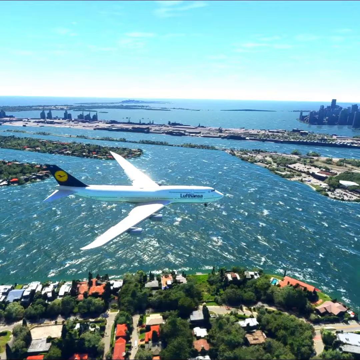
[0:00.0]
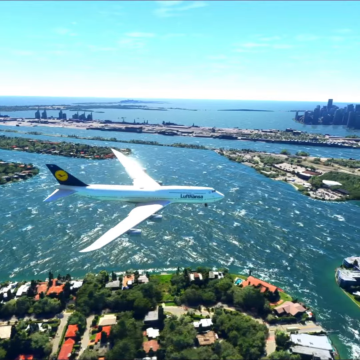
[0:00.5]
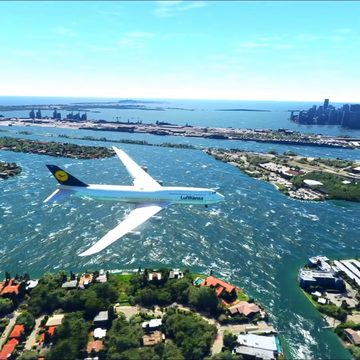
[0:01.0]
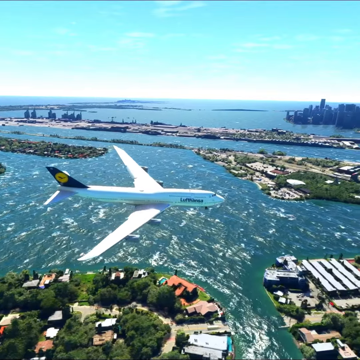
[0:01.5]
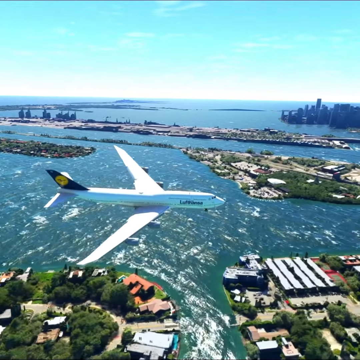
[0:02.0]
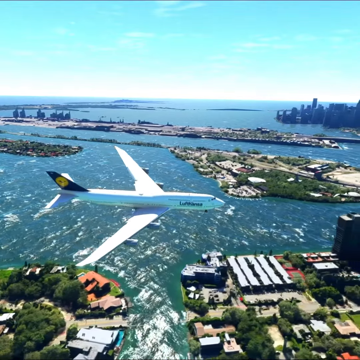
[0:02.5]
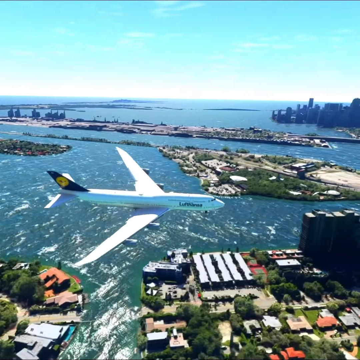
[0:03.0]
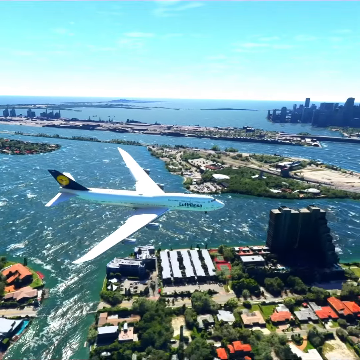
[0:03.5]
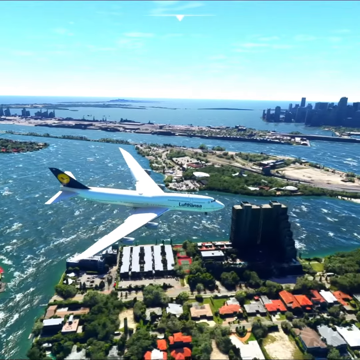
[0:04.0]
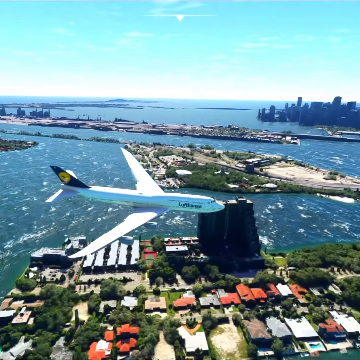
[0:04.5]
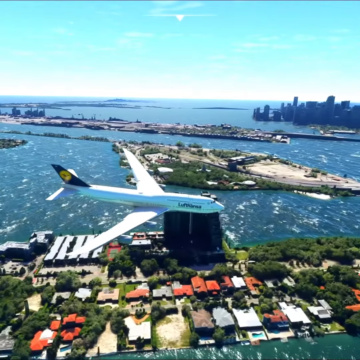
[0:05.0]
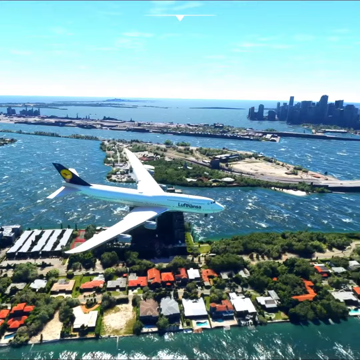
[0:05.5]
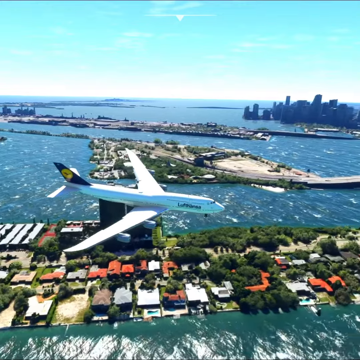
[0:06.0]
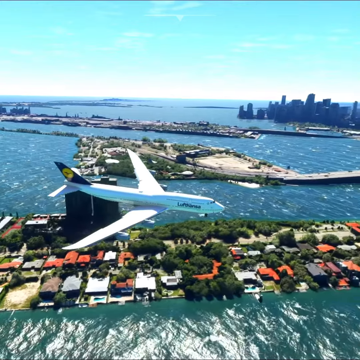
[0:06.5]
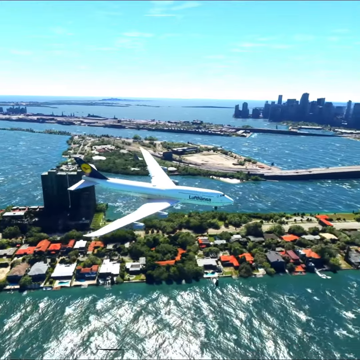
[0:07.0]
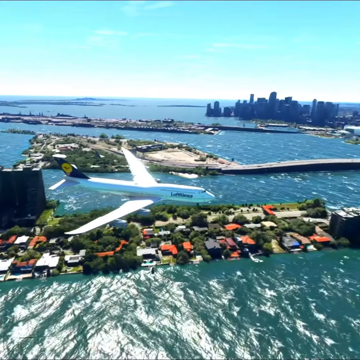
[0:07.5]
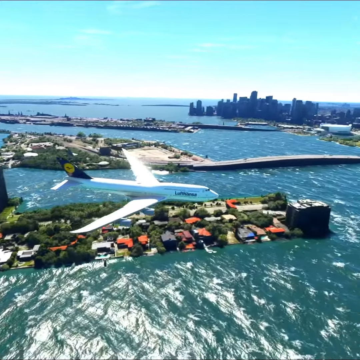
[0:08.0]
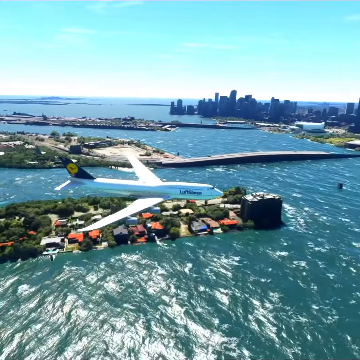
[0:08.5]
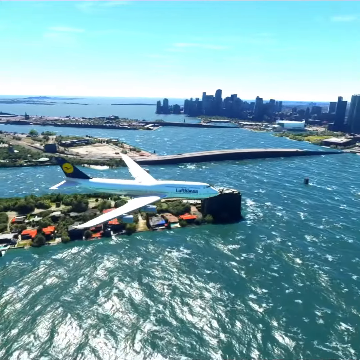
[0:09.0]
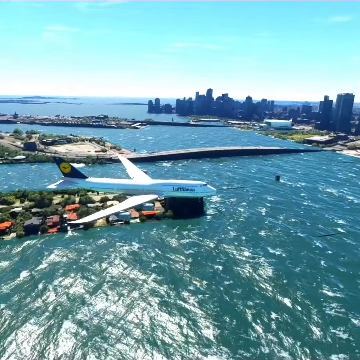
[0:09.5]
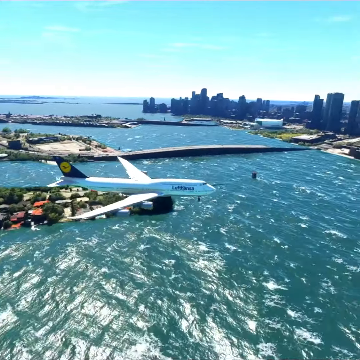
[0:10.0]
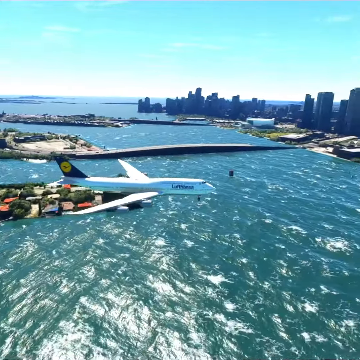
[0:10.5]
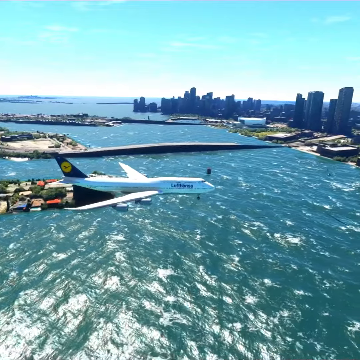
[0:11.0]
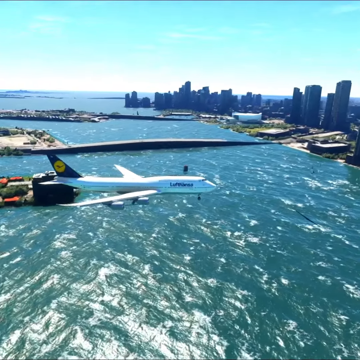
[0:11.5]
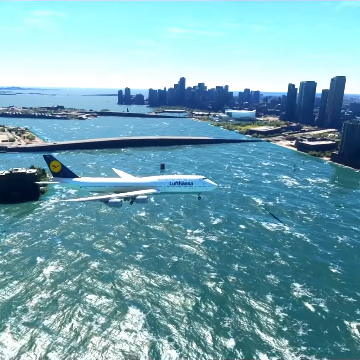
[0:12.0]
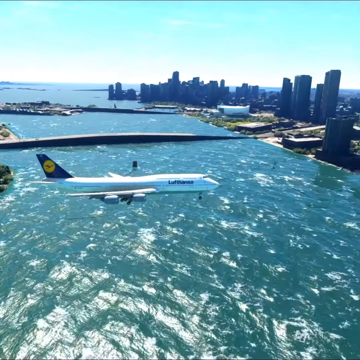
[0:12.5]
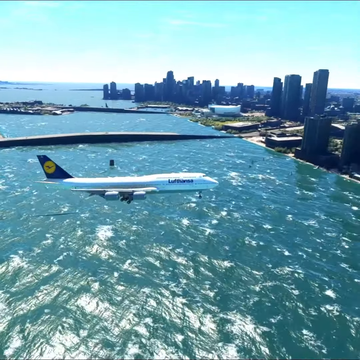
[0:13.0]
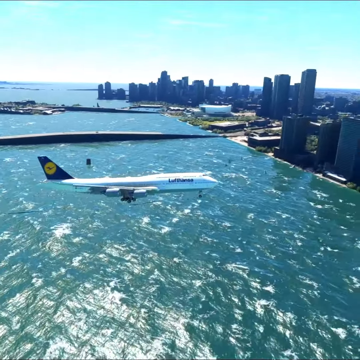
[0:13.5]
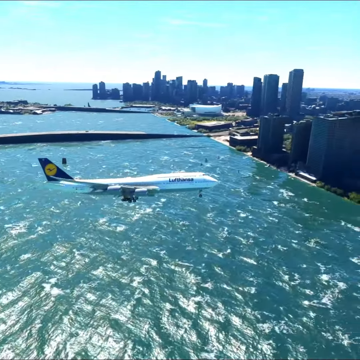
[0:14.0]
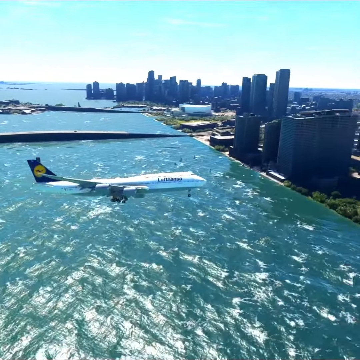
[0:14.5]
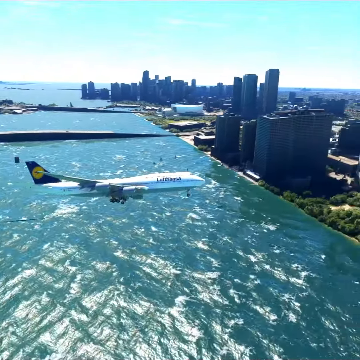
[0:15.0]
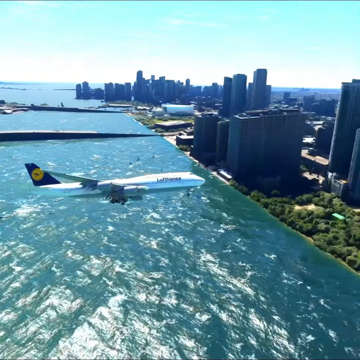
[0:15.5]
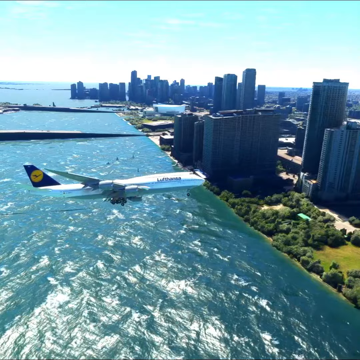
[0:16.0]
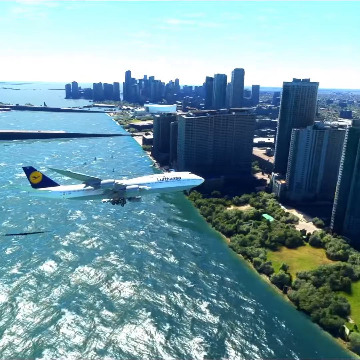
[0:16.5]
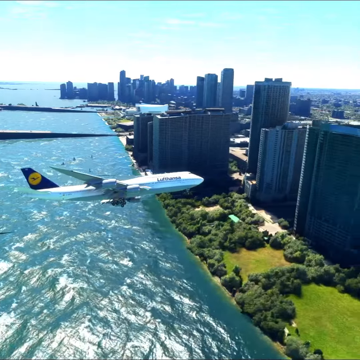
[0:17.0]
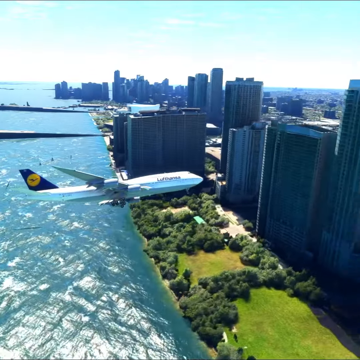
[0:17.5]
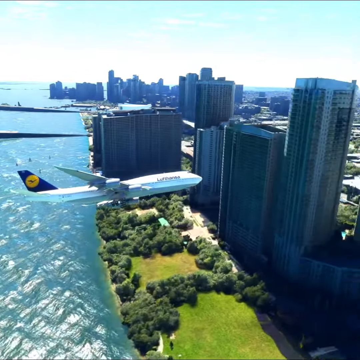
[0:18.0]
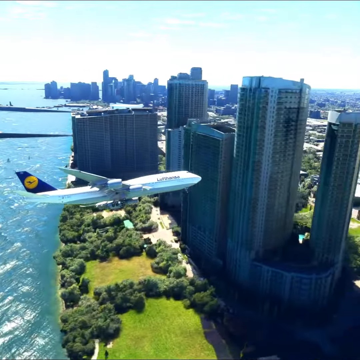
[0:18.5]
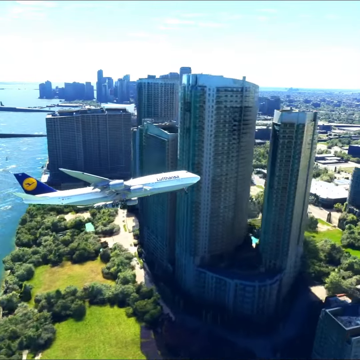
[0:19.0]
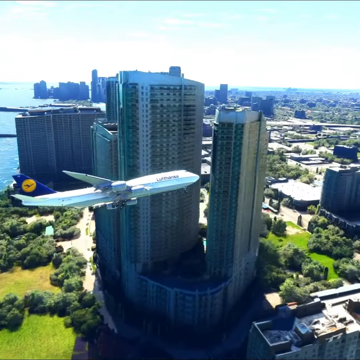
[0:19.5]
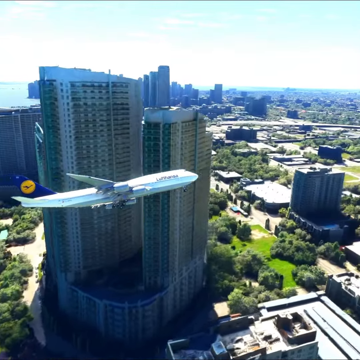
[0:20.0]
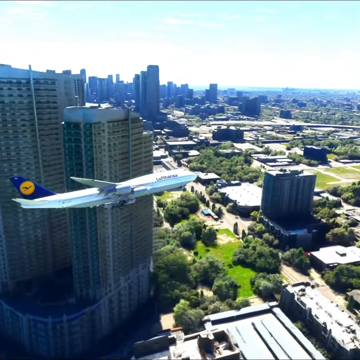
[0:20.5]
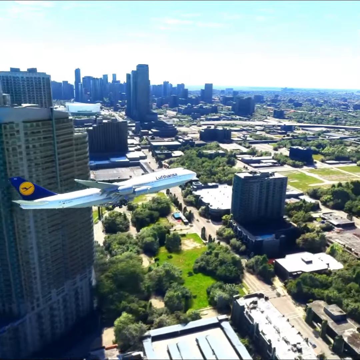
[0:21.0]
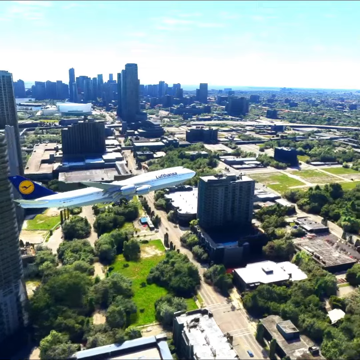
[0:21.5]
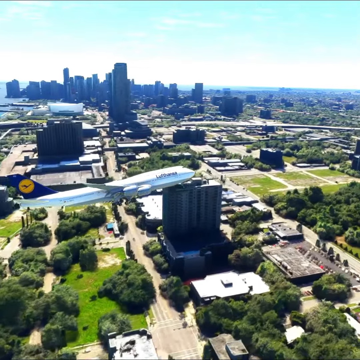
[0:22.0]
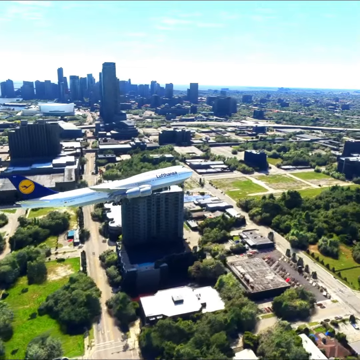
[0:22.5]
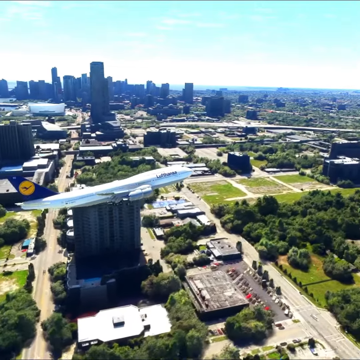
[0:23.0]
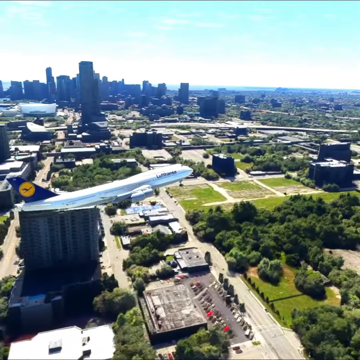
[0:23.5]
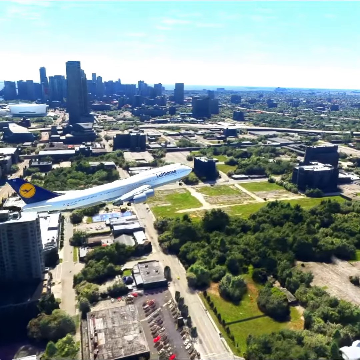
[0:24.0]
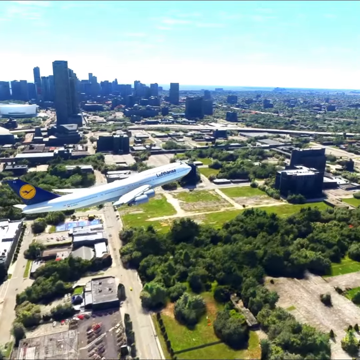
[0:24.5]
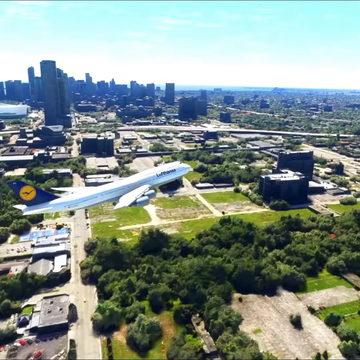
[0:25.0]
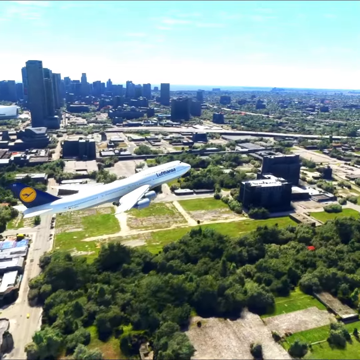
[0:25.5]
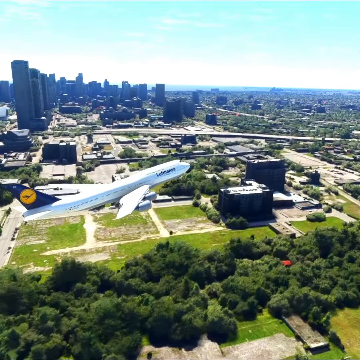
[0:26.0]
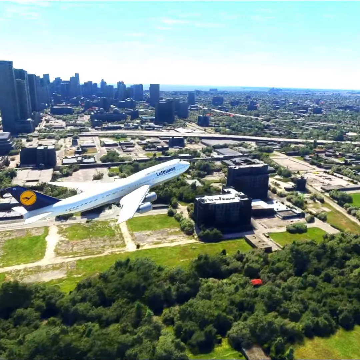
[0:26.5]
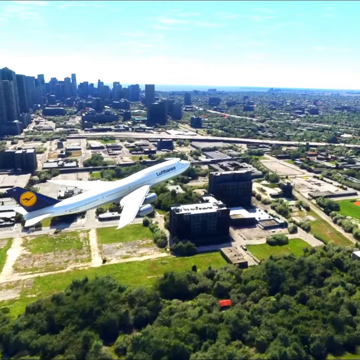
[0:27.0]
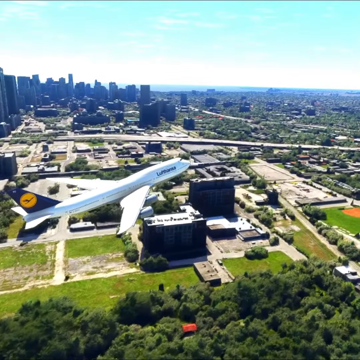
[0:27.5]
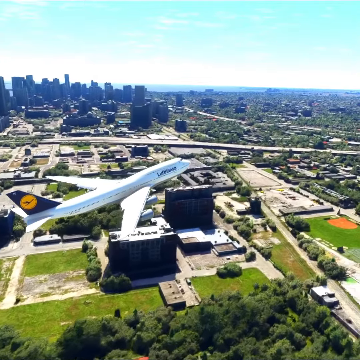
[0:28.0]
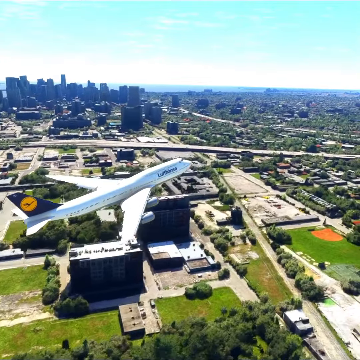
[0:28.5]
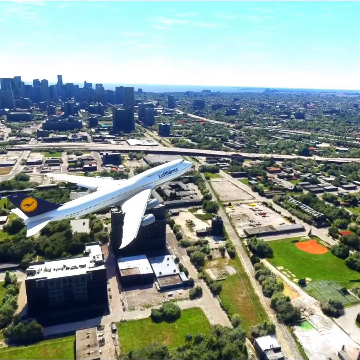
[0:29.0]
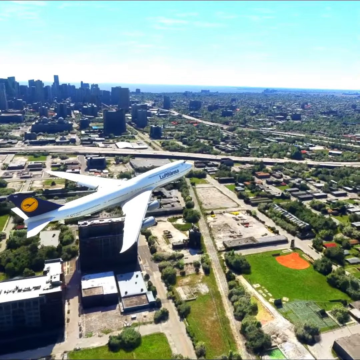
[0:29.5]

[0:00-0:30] A passenger plane travels low over some water. The sun shines down on the water below, making it very blue, and neighborhoods are visible below. One neighborhood, right on the water's edge, has many different colored roofs, and streets can be seen. A bridge crosses the water, with a vehicle traveling over it. The plane is large and white, with the name Lufthansa on the front side; the back tail wing is a dark color, with a yellow circle in the center and an image of a bird in flight on it. The plane continues over the water and over a city with tall buildings, still traveling low, with more neighborhoods and buildings below. Roads, areas of grass and trees, and a lot of trees on the water's edge are visible, along with the tall buildings. Then a more spread out area comes into view as the plane starts to point its nose toward the blue sky above and starts to ascend.